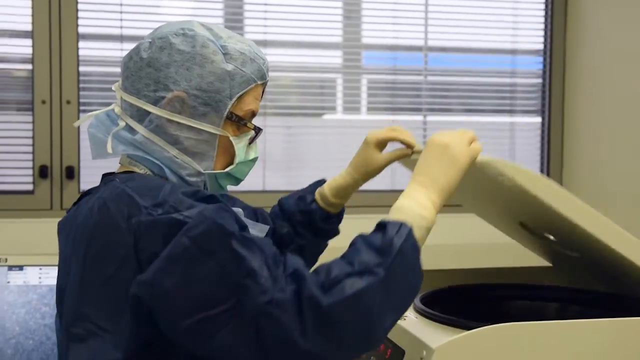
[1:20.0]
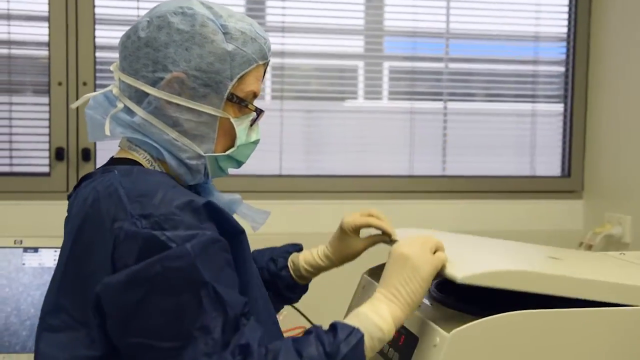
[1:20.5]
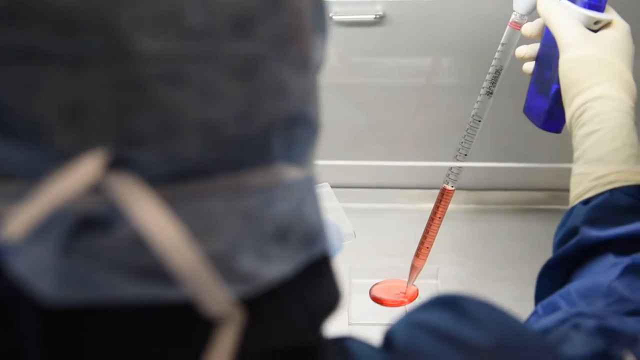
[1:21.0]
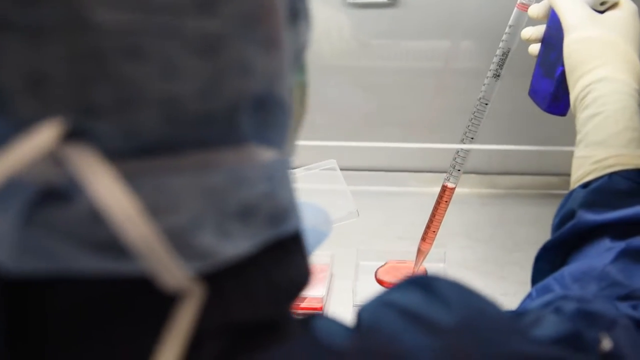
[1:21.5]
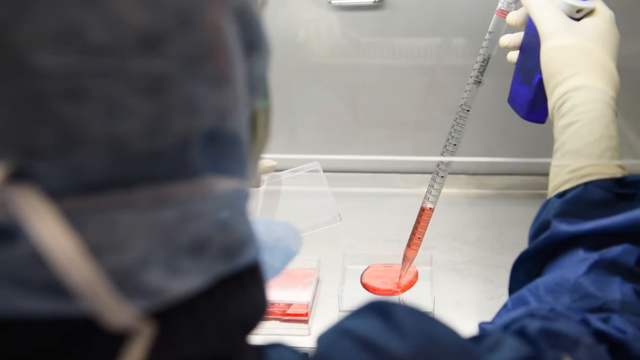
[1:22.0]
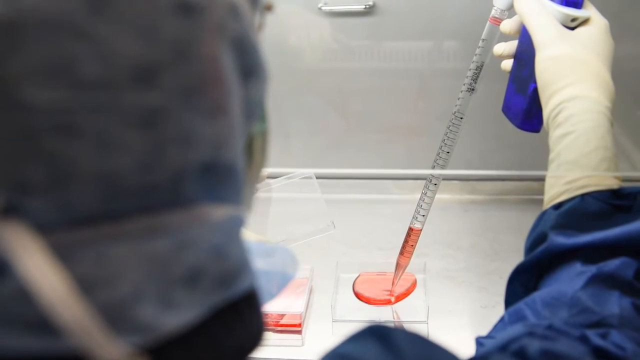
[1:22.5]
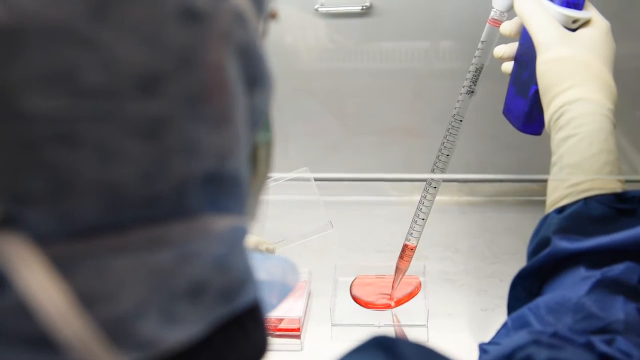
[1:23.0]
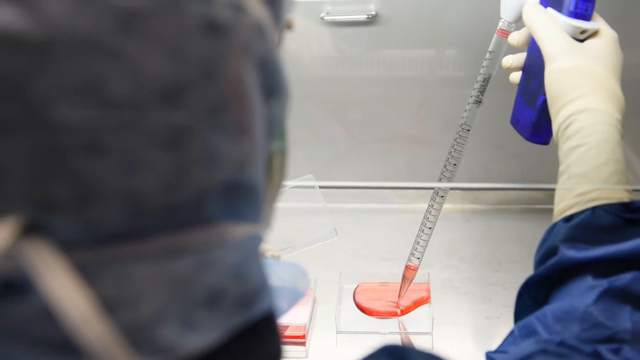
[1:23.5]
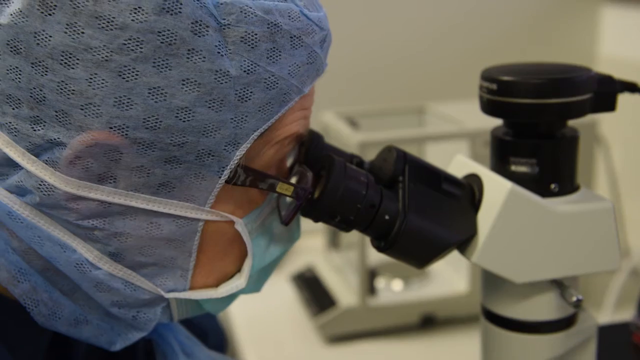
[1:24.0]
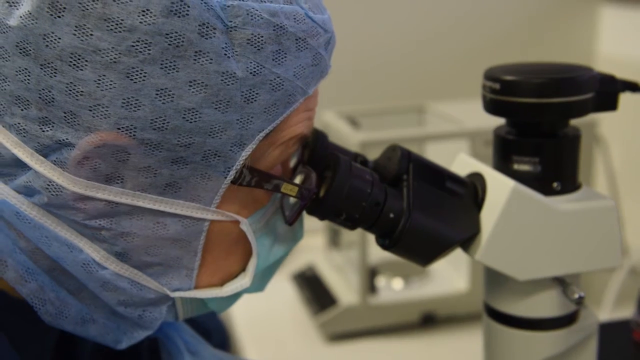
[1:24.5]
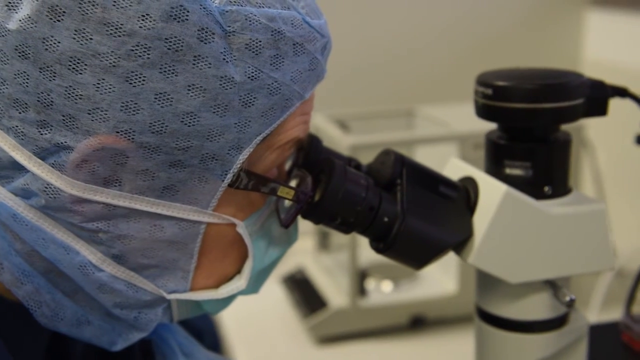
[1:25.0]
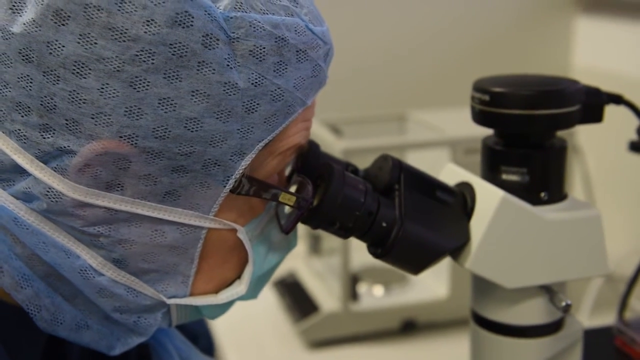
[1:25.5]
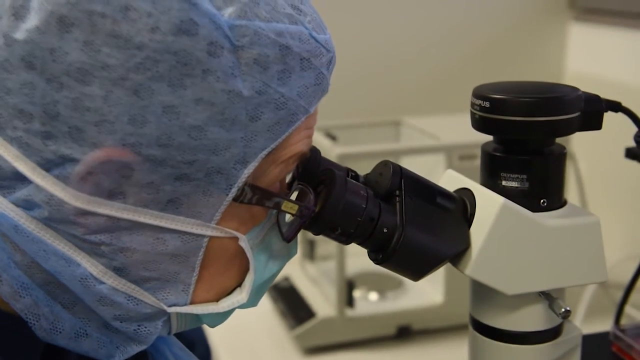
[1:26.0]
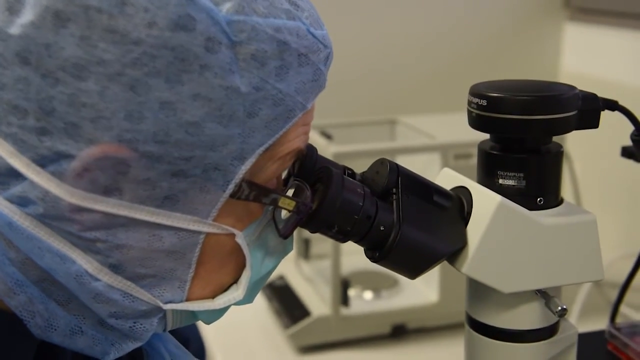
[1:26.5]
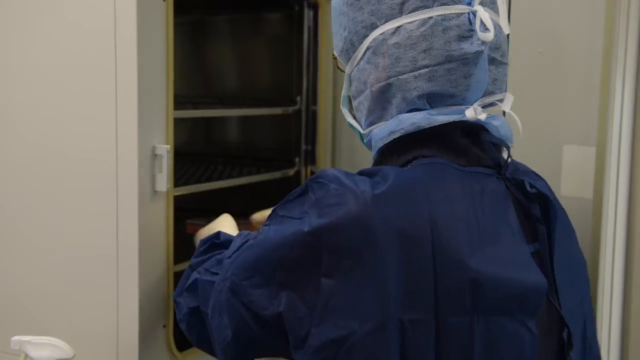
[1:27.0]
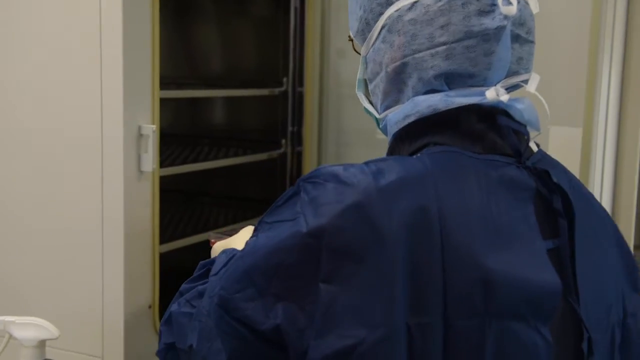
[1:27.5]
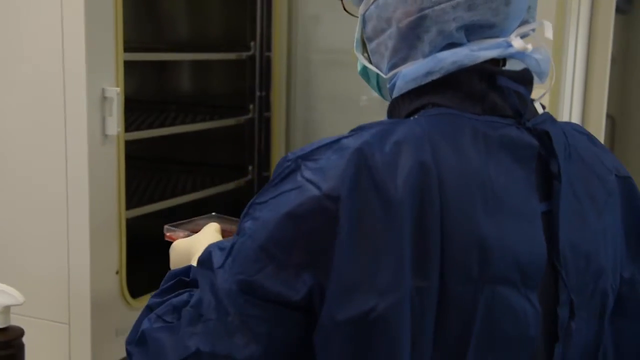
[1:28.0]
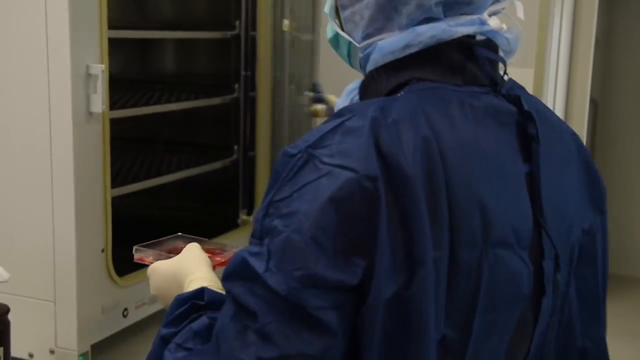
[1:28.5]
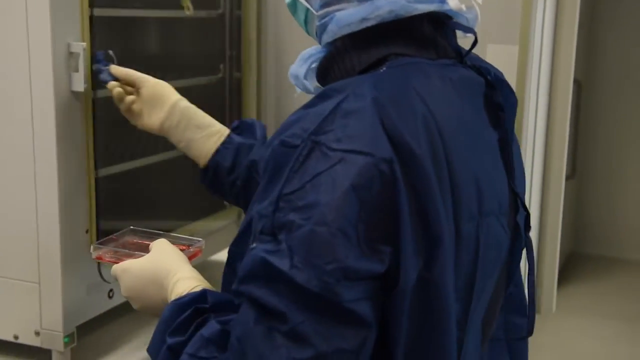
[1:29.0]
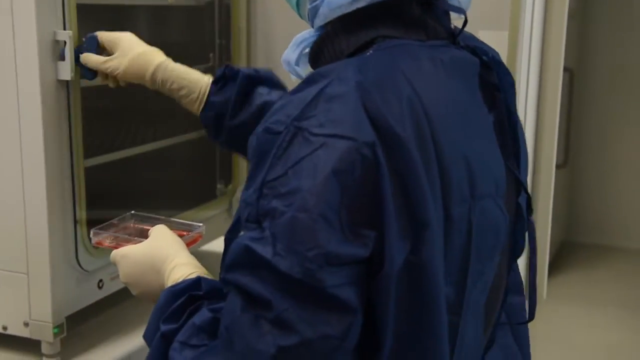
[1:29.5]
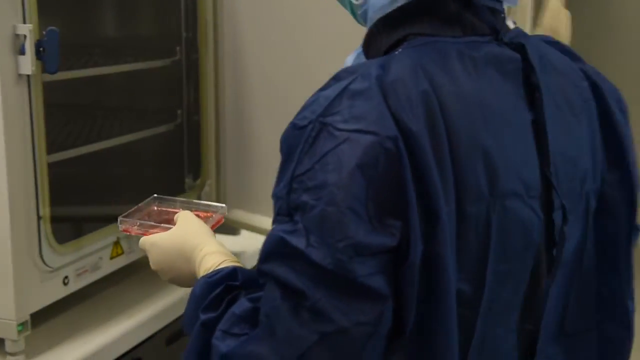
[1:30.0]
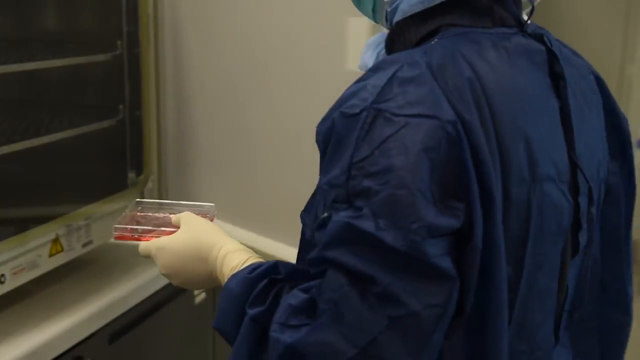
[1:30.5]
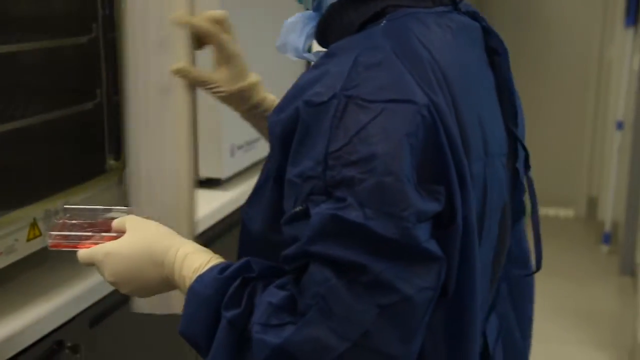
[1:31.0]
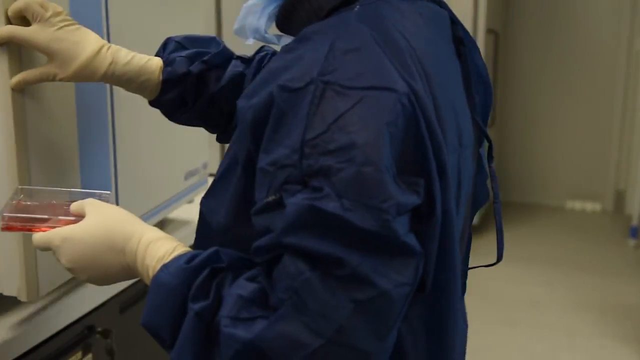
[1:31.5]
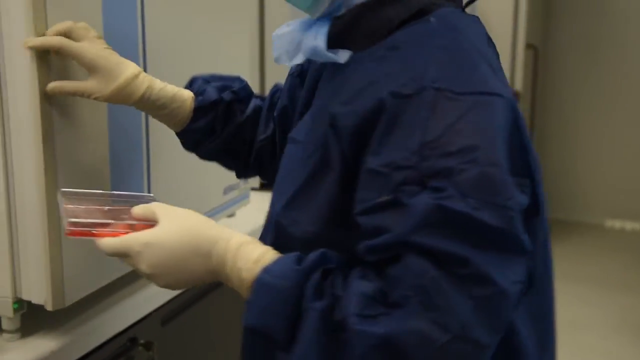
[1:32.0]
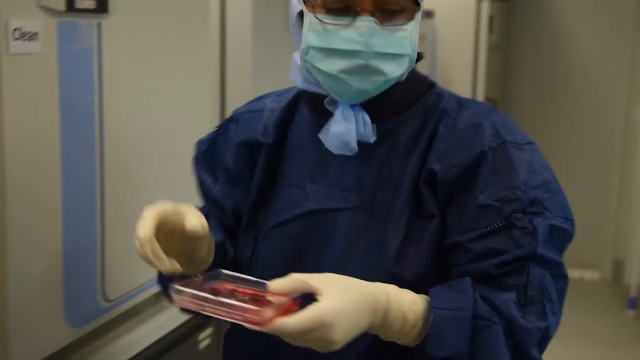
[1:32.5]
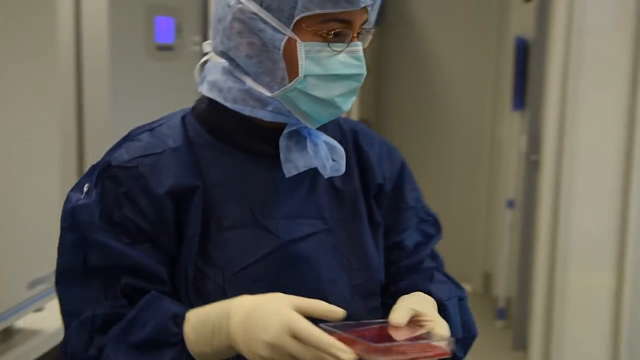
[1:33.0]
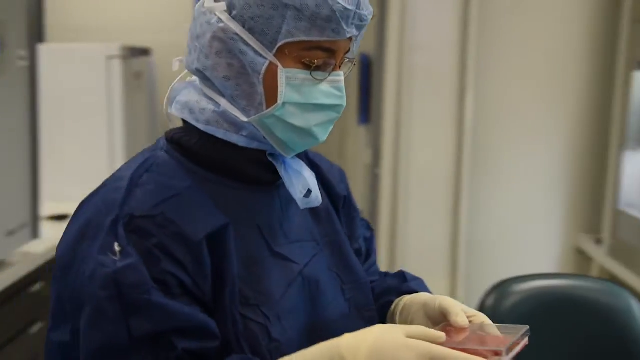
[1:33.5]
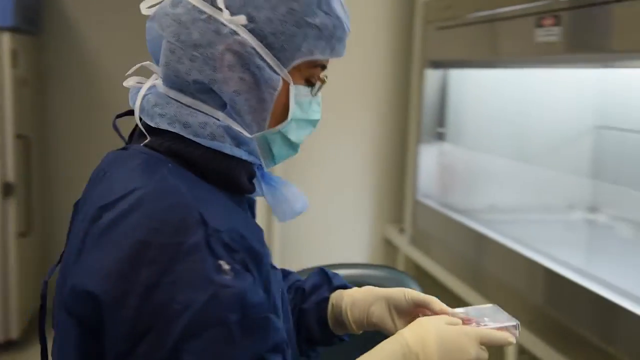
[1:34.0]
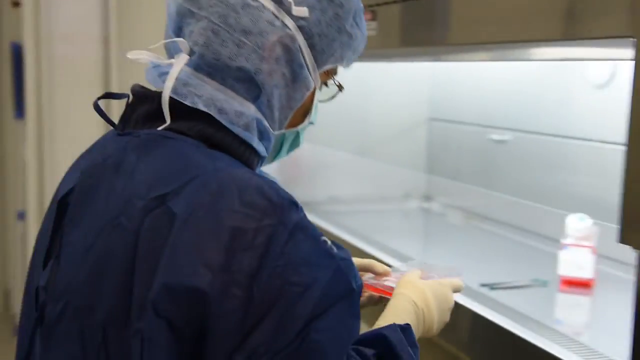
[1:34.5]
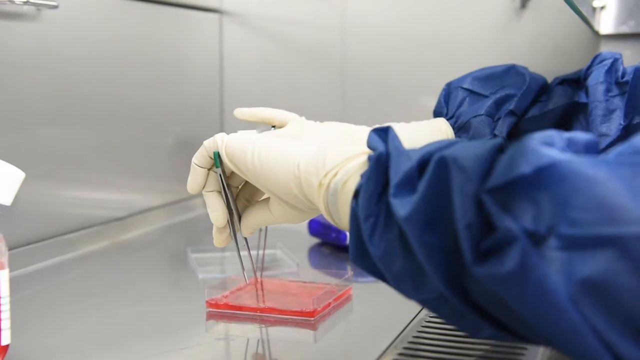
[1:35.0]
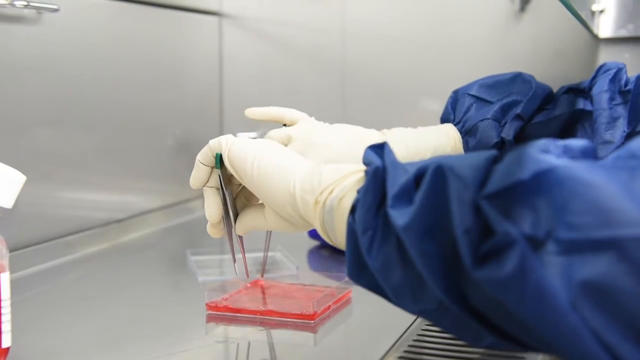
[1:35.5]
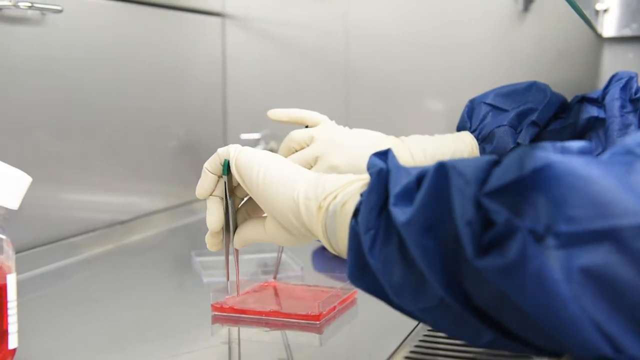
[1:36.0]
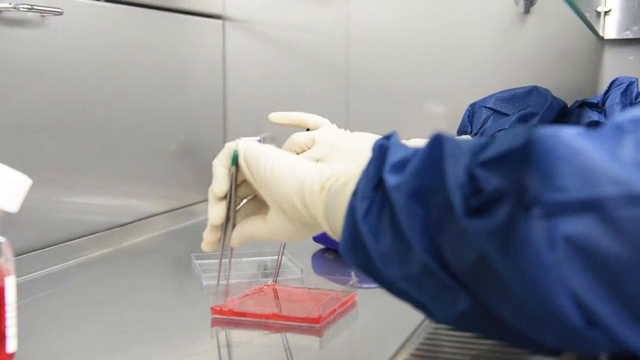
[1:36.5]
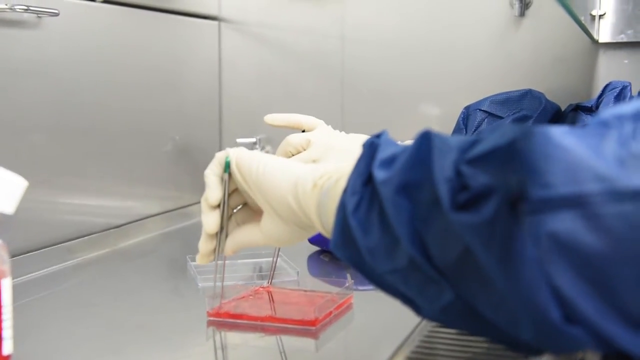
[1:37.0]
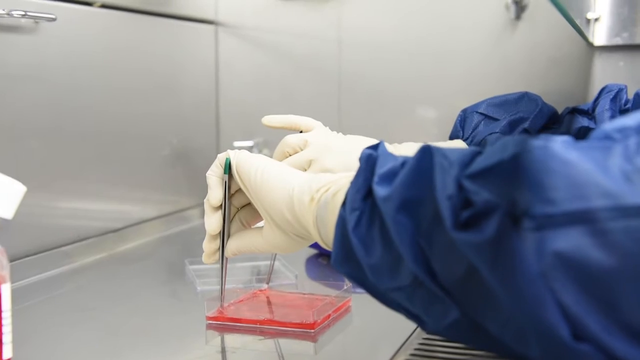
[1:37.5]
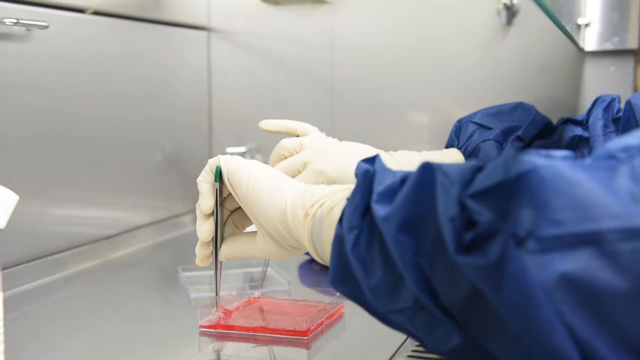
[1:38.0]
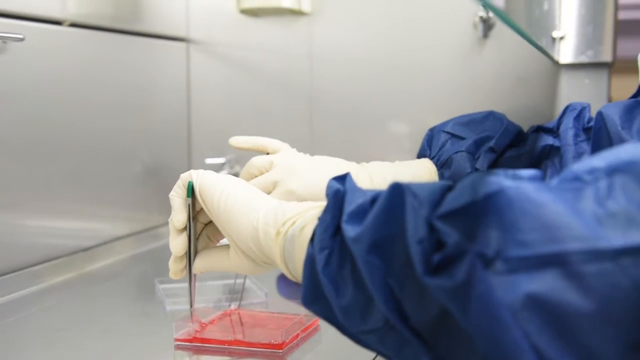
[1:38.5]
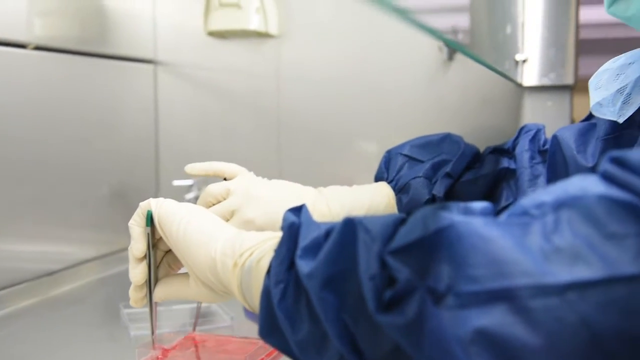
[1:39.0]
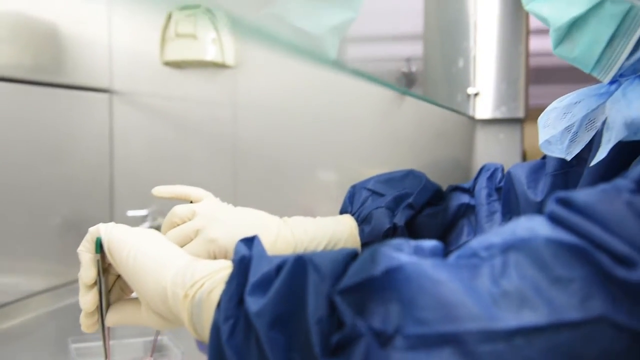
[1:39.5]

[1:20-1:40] A female technician works in a lab, wearing a mask, a hairnet, a blue gown, white rubber gloves and black glasses. She has opened a container and squirts a liquid from a very large syringe onto a stainless steel area, then looks into a microscope. Pulling pink liquid out of a container, she puts it into another container, and then uses tweezers to pick up the edges of what she has formed the pink liquid into. She stands in front of windows with many blinds, visible behind her on the left and right.